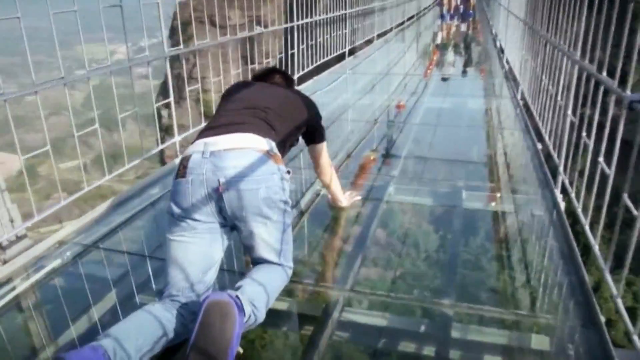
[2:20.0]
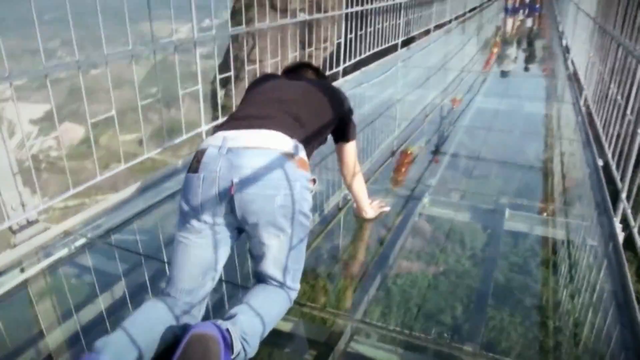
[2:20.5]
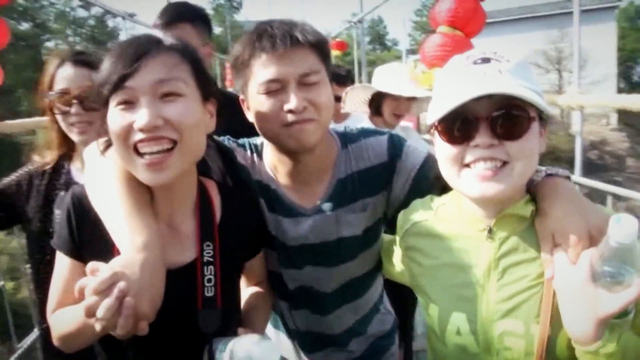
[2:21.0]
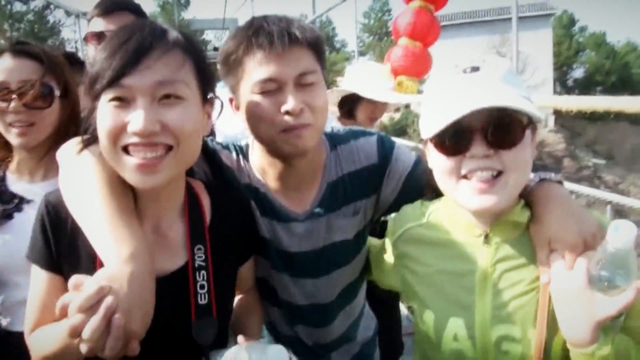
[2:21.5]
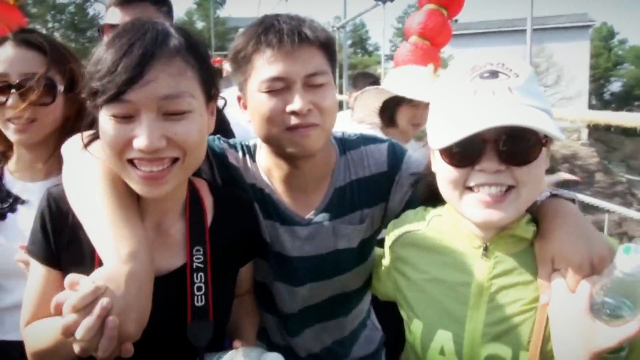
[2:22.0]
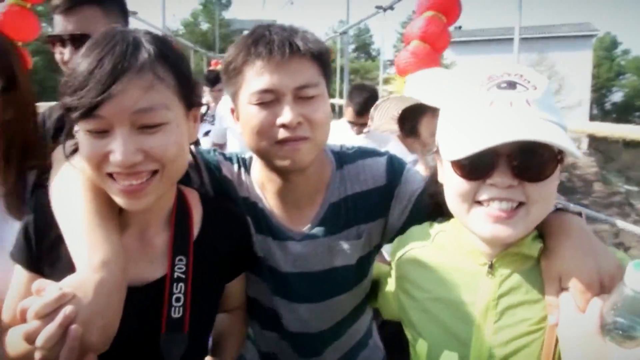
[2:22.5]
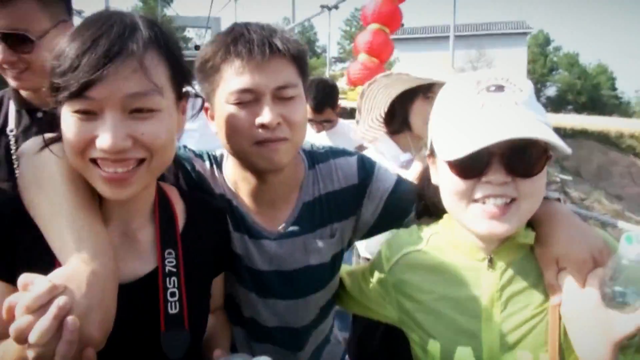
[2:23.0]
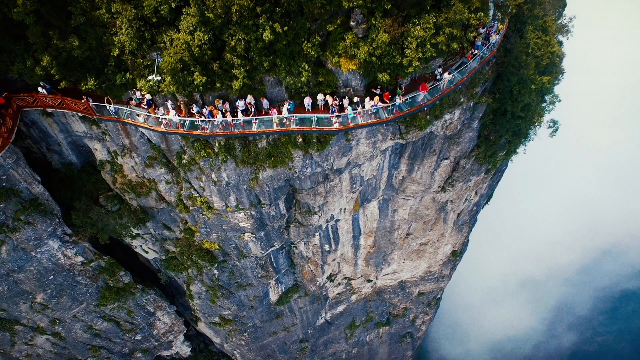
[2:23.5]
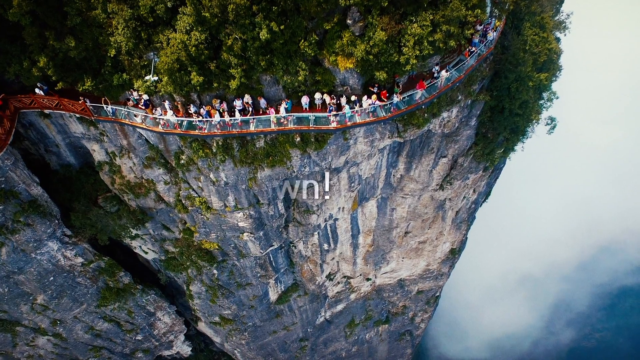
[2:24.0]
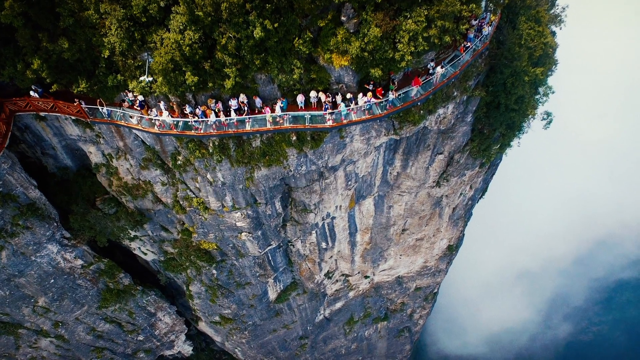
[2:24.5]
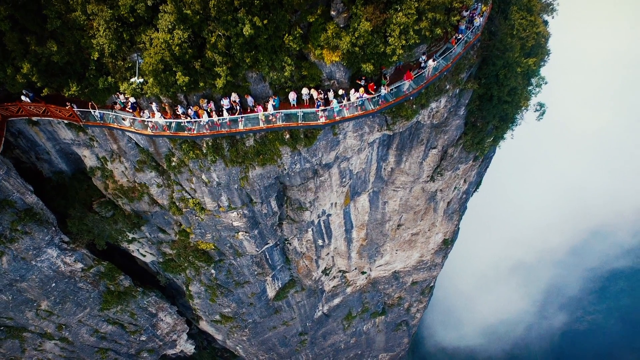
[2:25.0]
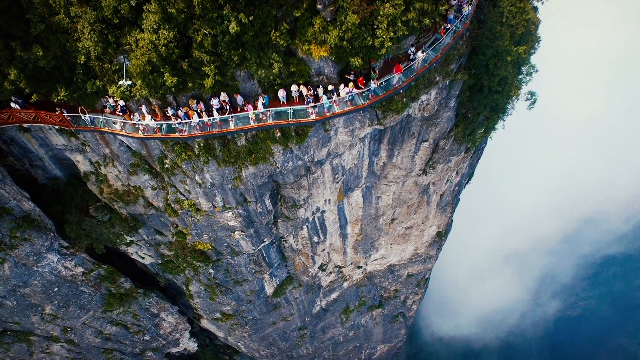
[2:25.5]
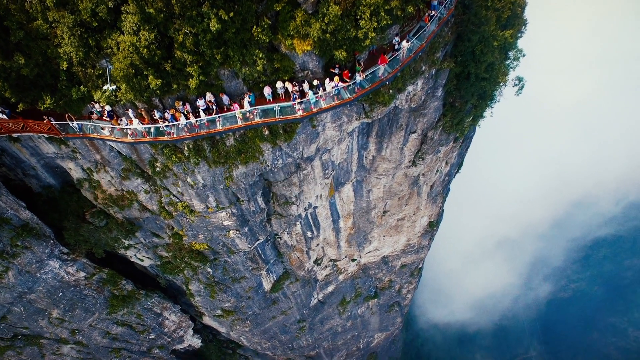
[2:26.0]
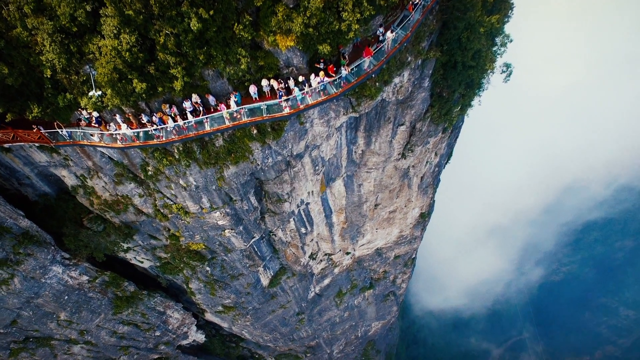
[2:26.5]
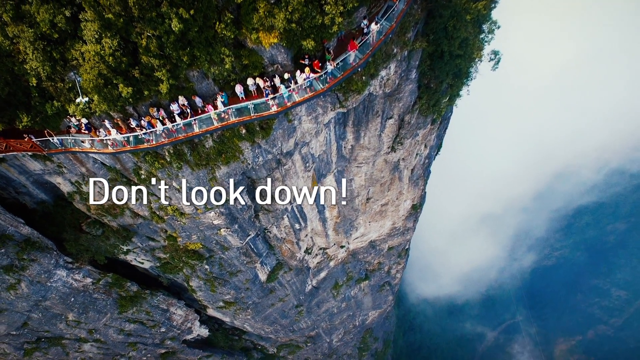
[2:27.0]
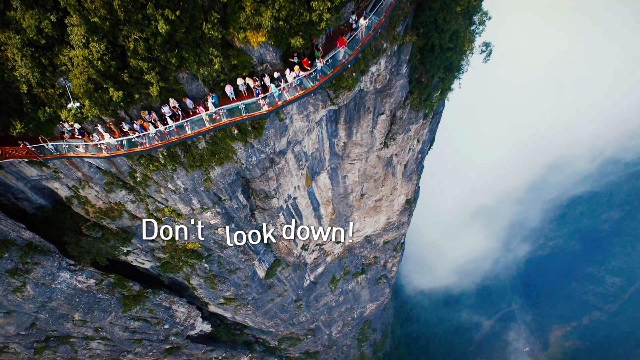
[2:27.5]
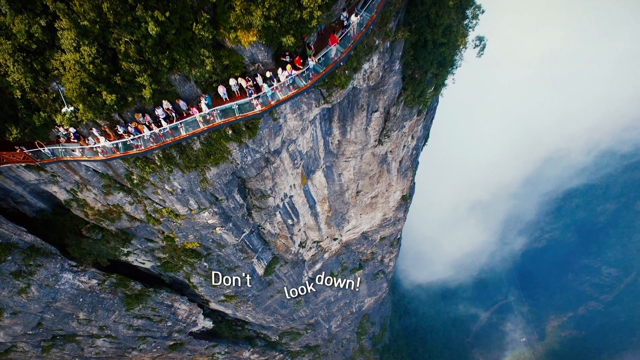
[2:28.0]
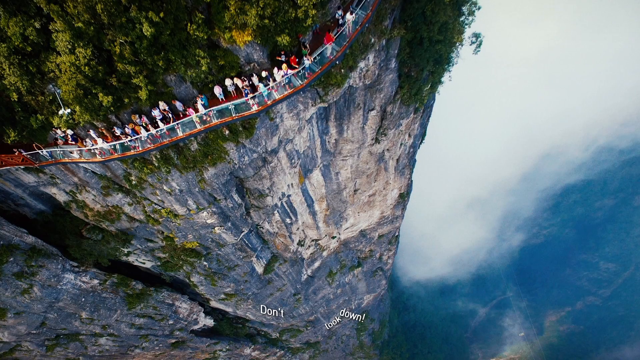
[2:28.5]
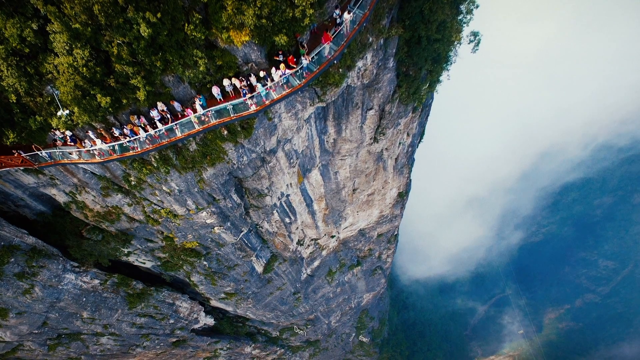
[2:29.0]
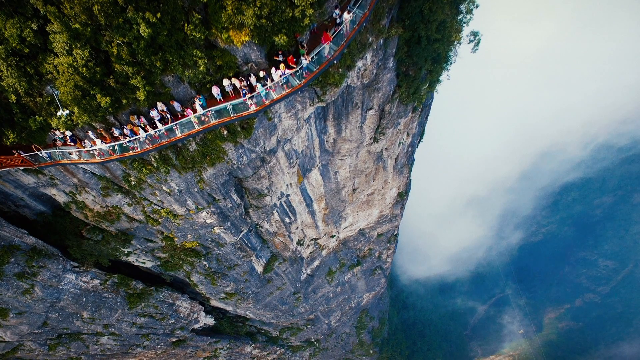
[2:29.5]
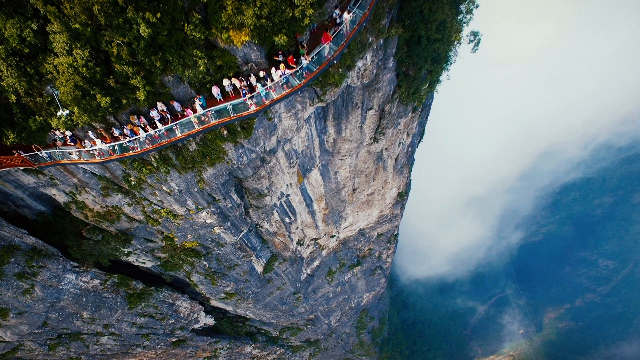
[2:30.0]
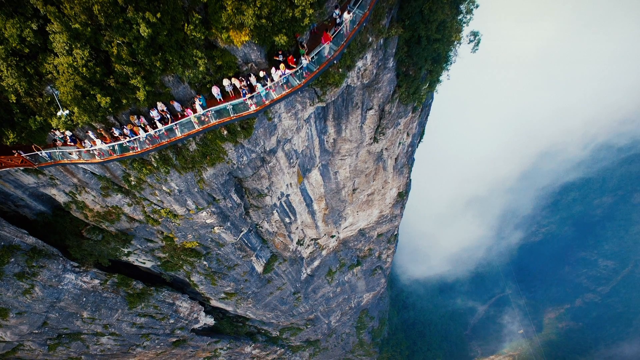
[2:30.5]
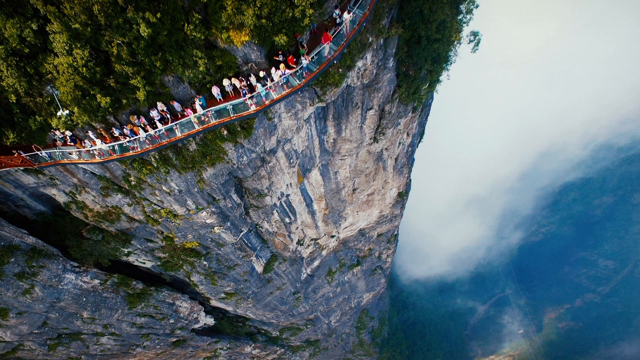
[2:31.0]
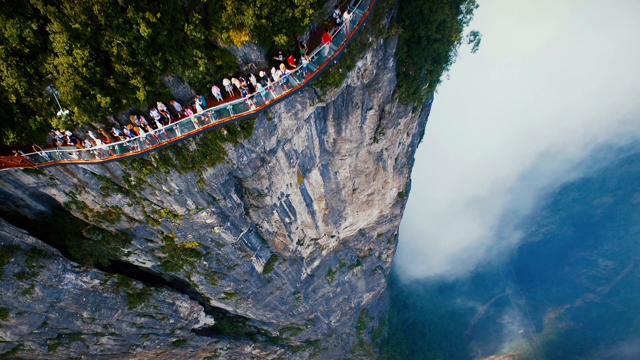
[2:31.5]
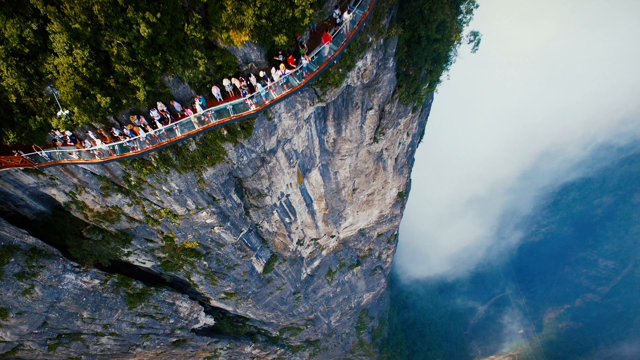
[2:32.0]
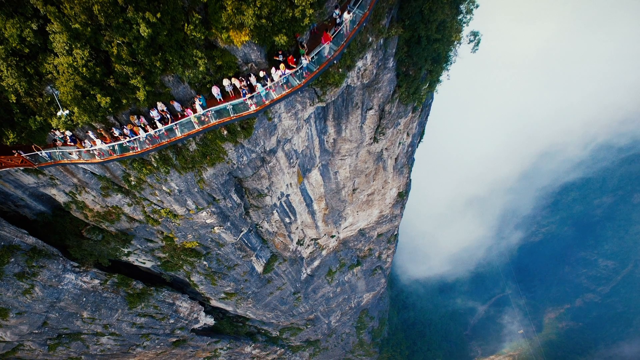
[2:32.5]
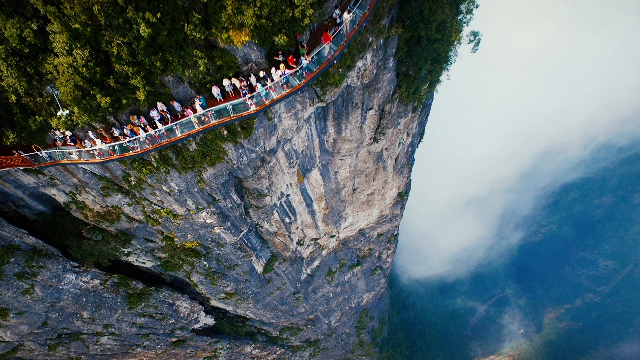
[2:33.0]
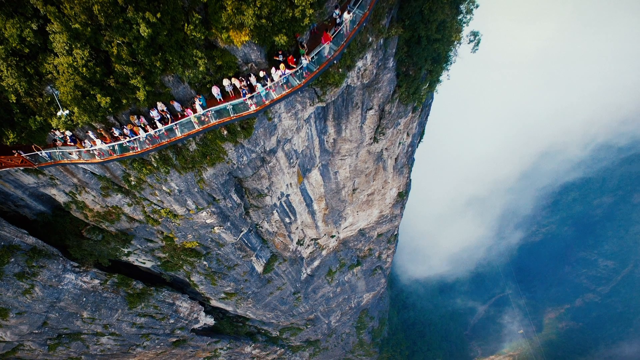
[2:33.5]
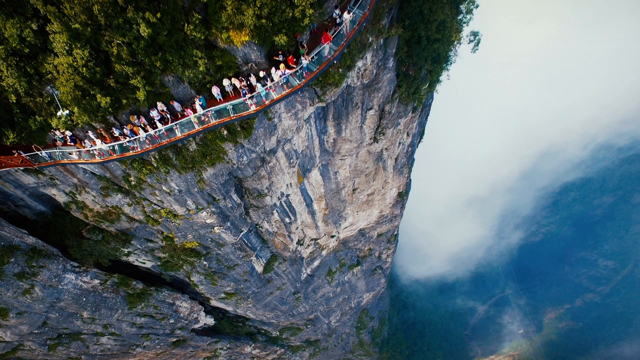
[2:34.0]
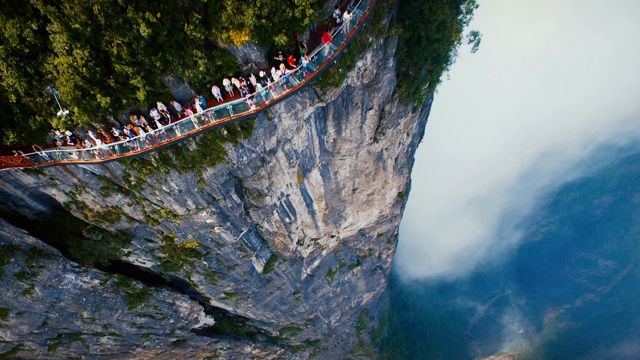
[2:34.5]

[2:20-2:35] A man wearing a black shirt and blue jeans crawls on all fours over the very long glass bridge that connects mountains. The video cuts to a man in a striped shirt who closes his eyes, with his left and right arms around the shoulders of two women on his right and left as they walk over the bridge with him; he is truly afraid. A shot shows a bridge on the side of a mountain with text reading "don't look down" as the shot moves, revealing waves and water at the side, or possibly clouds.